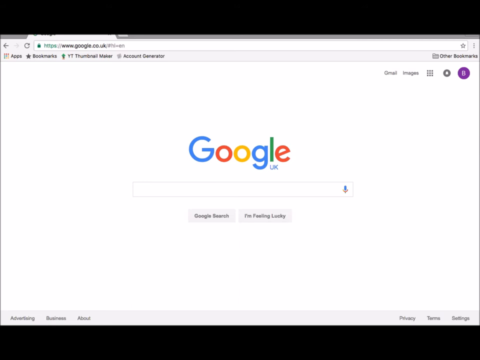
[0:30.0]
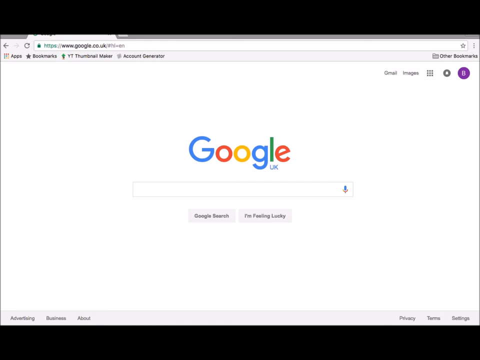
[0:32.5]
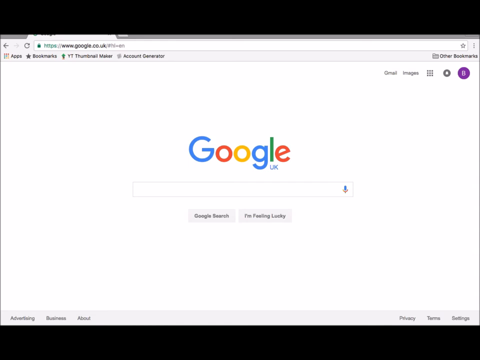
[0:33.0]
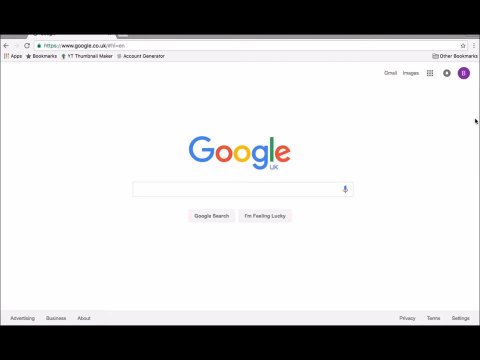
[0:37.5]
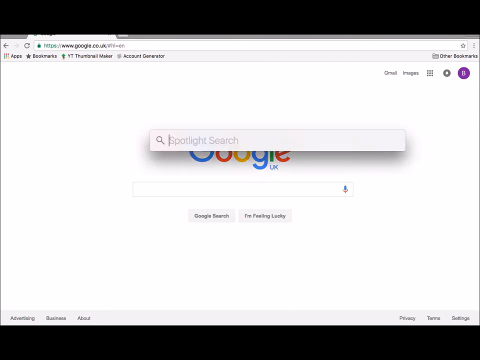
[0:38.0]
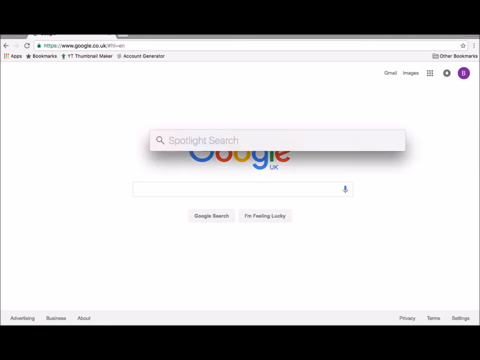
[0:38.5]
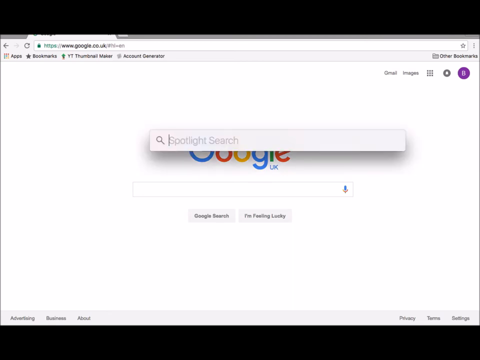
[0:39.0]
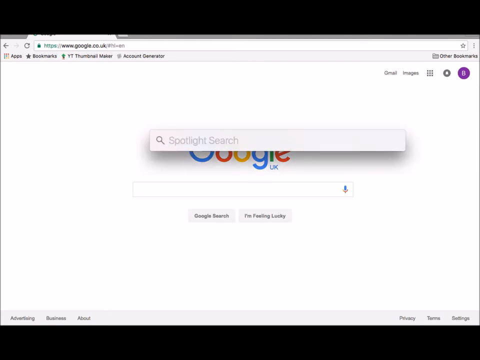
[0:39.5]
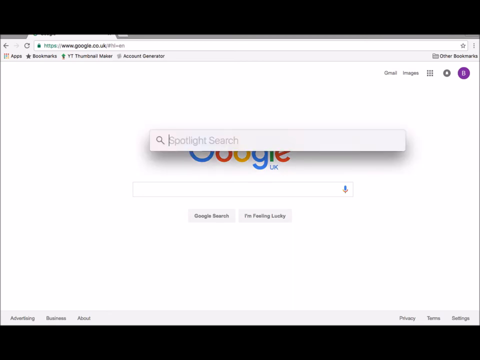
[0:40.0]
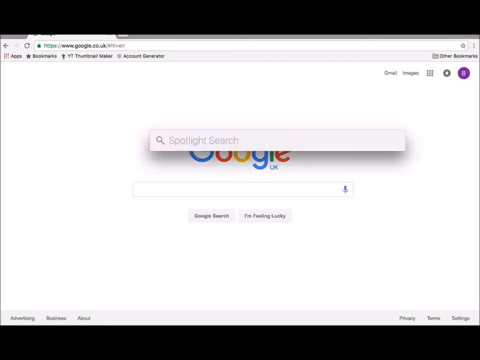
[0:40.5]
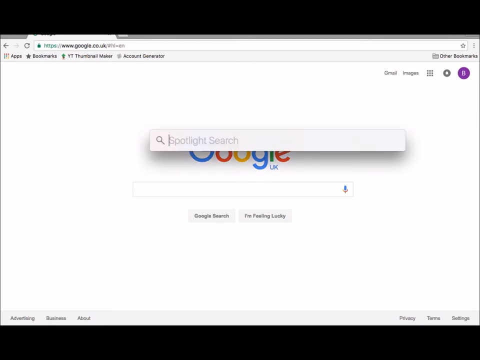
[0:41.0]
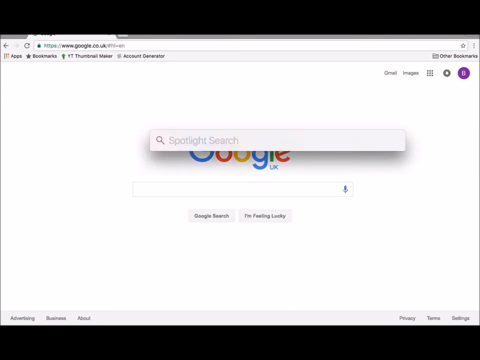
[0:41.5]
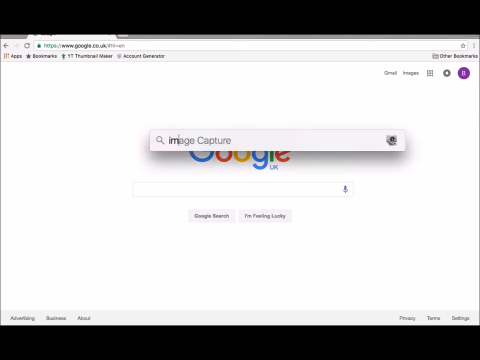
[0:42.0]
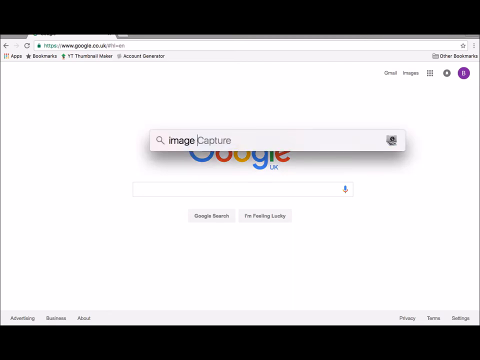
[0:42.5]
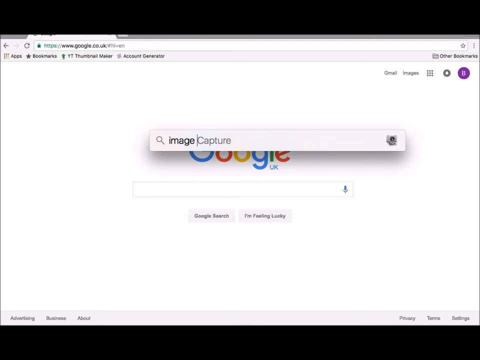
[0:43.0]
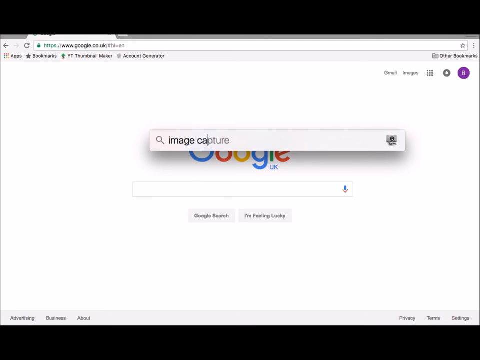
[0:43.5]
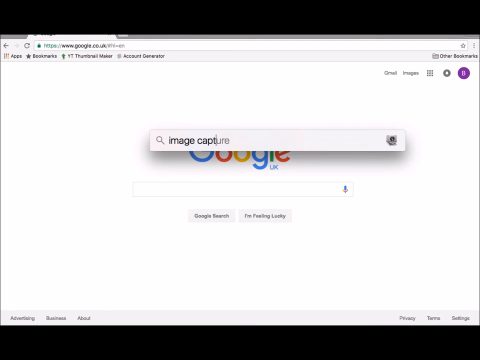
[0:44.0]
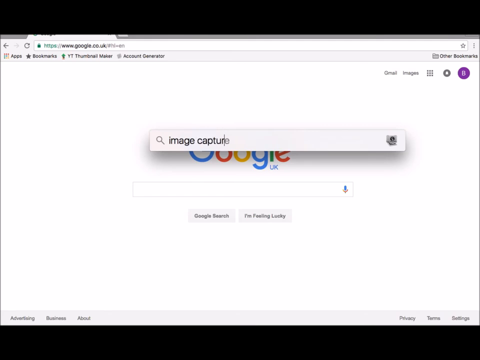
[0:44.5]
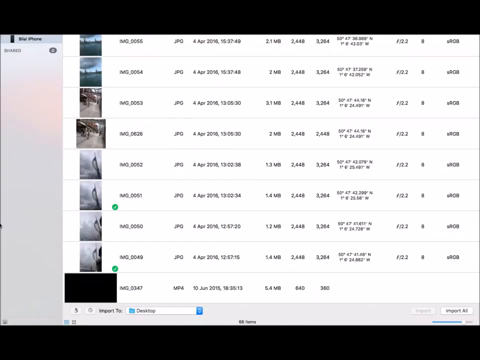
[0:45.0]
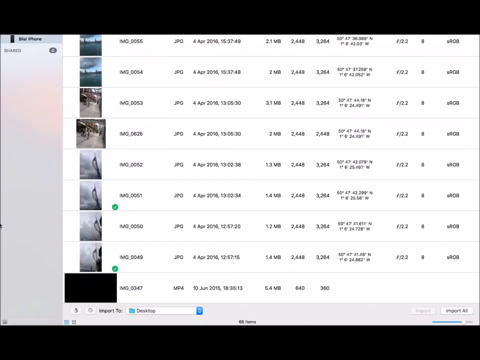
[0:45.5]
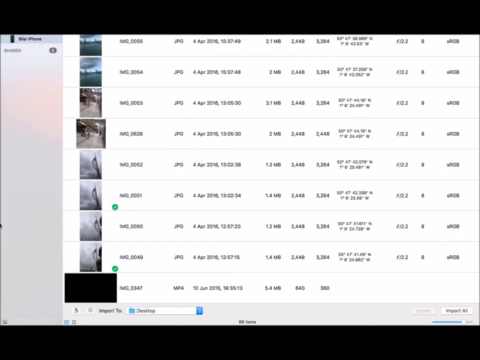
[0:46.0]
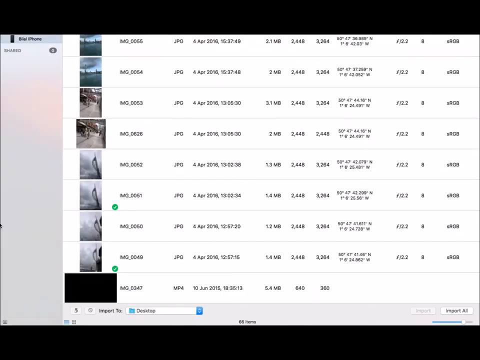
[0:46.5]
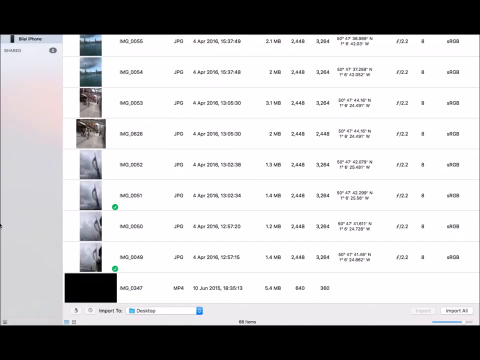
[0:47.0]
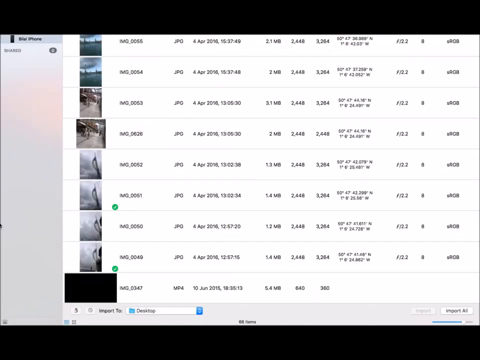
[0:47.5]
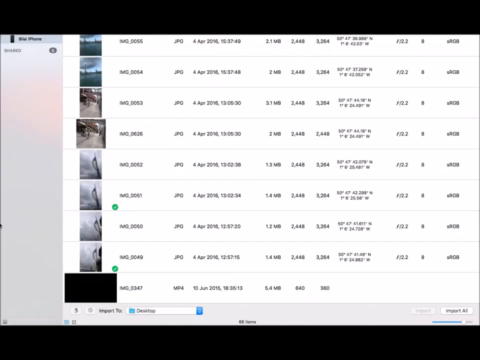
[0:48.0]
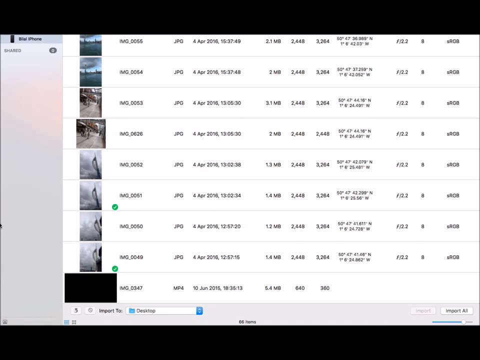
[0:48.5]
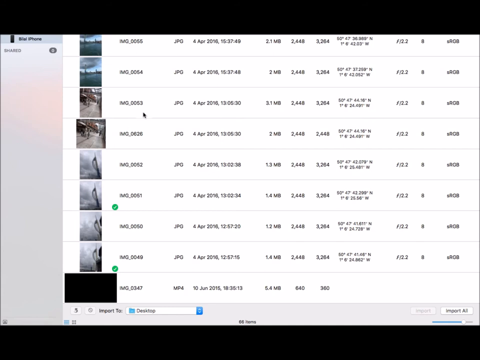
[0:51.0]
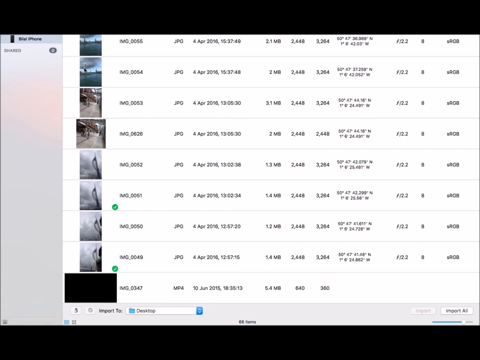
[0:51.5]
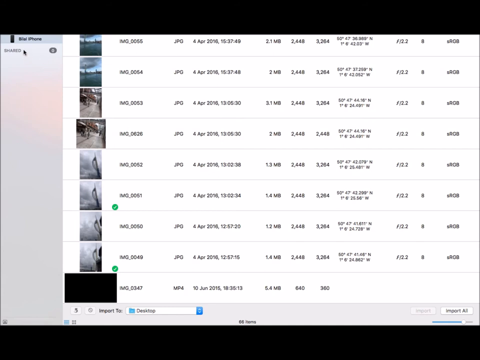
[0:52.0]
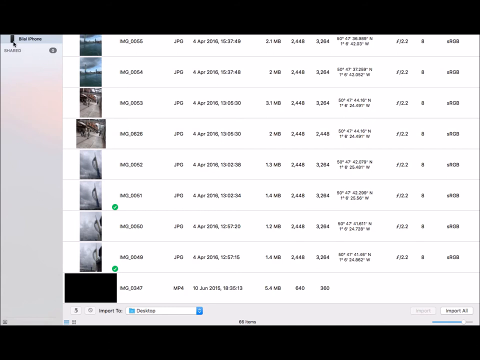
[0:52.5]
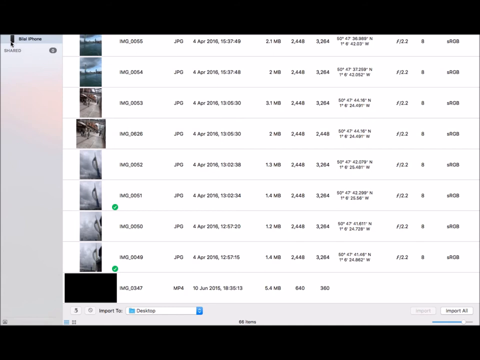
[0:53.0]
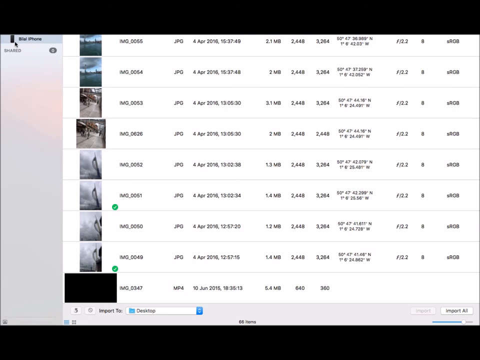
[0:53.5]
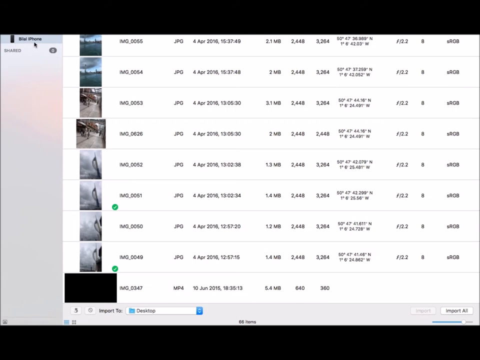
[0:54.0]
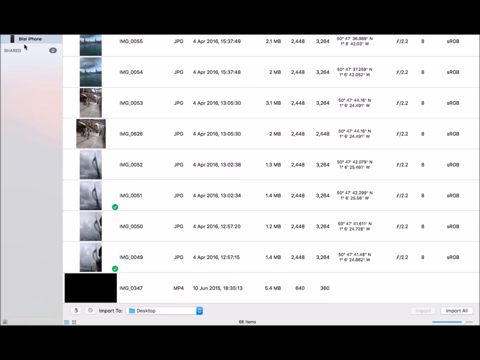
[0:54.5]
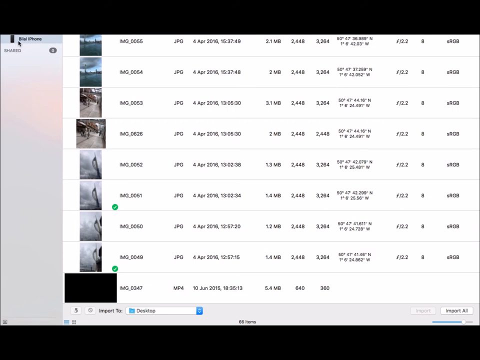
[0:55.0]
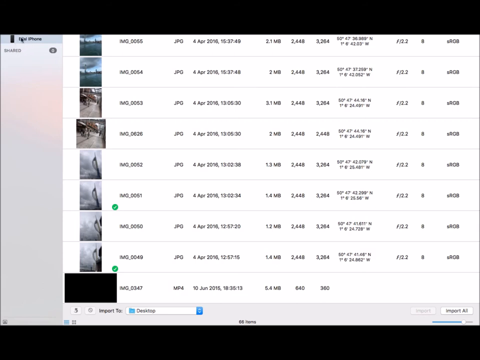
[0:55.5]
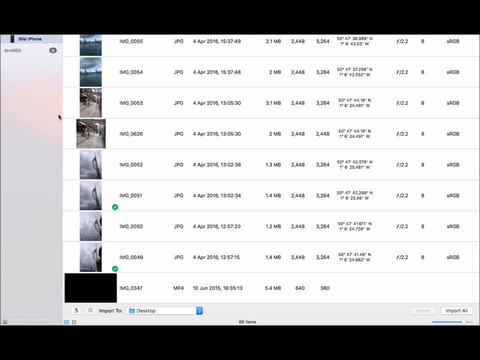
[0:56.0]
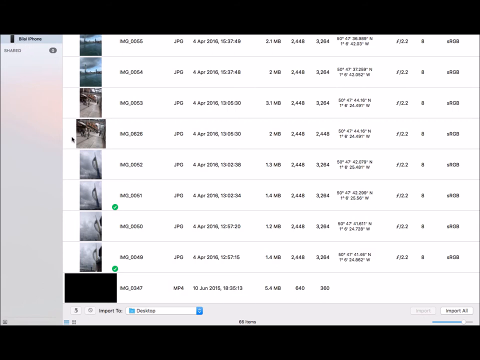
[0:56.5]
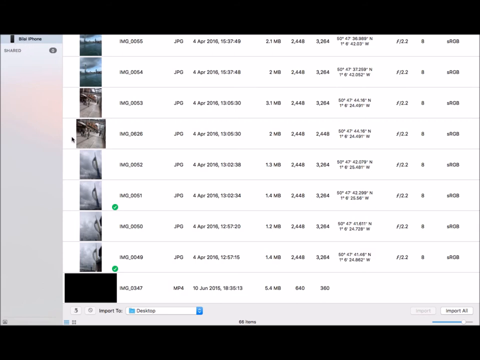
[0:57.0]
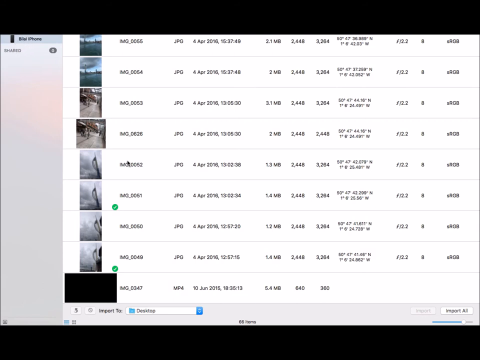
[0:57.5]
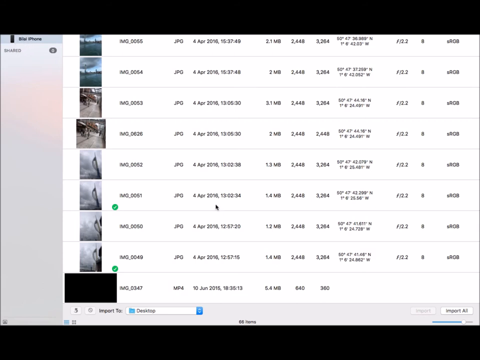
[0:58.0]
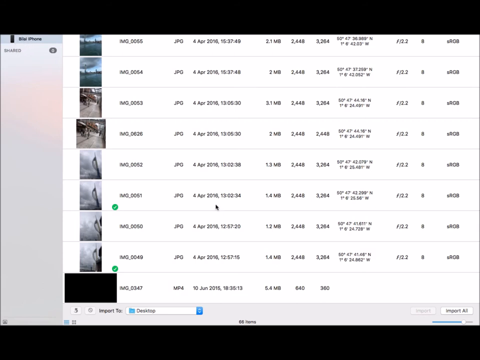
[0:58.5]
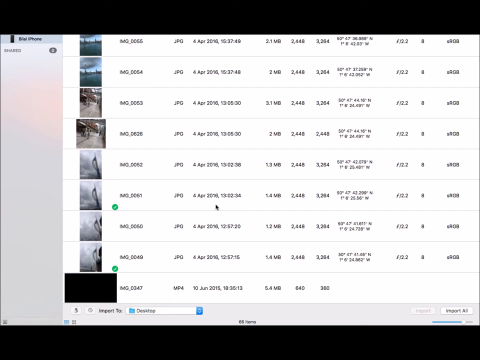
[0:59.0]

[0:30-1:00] To the left of the Google link are back and forward navigation arrows and a refresh circle. A mouse comes onto the screen from the right side. Another search bar labeled "Spotlight Search" appears, with a blinking line showing it is ready for typing. The words "image capture" are typed into it. A program opens showing images that have been taken or saved to the computer's storage. Each entry shows an image icon on the left next to an image number, followed by the document style, date, millibytes, and other information. The person moves the mouse over the iPhone logo on the left side of the screen, which is just a small black rectangle. Underneath it is a shared category button with a zero next to it.